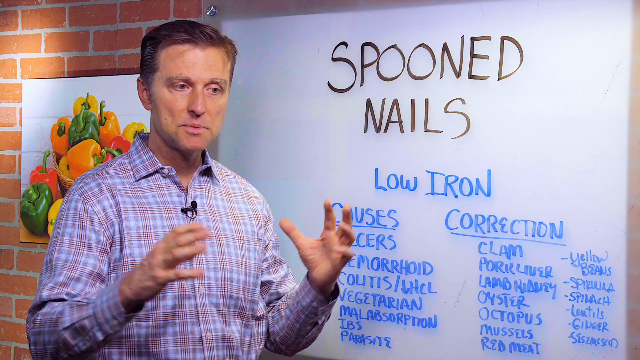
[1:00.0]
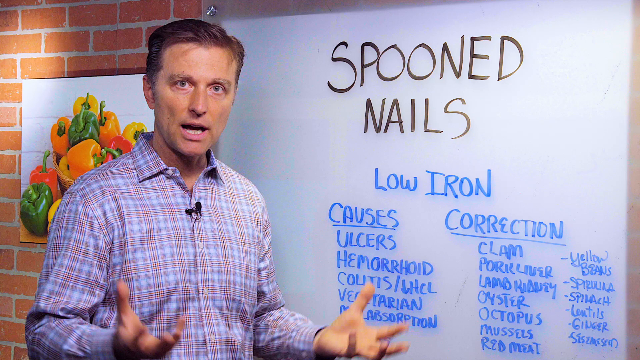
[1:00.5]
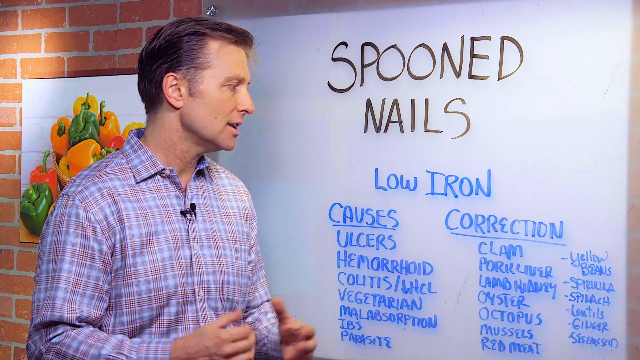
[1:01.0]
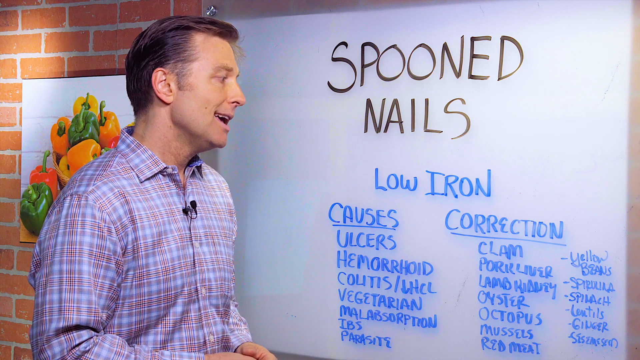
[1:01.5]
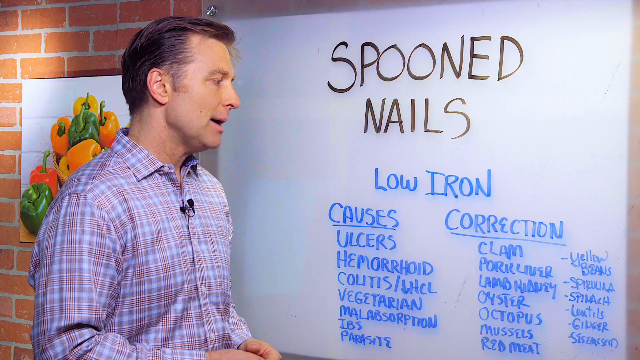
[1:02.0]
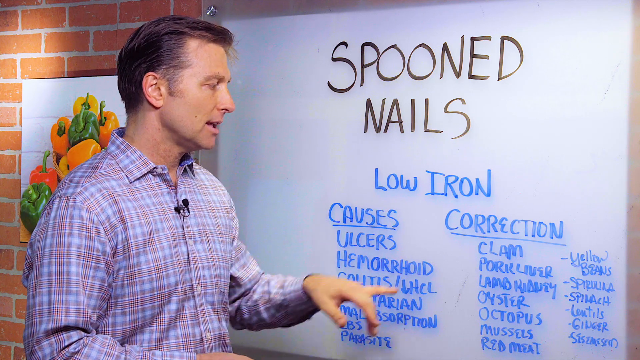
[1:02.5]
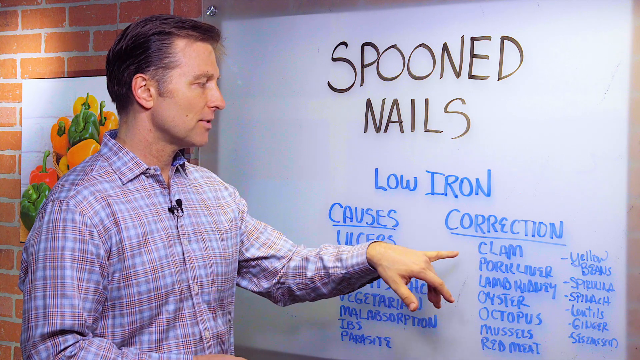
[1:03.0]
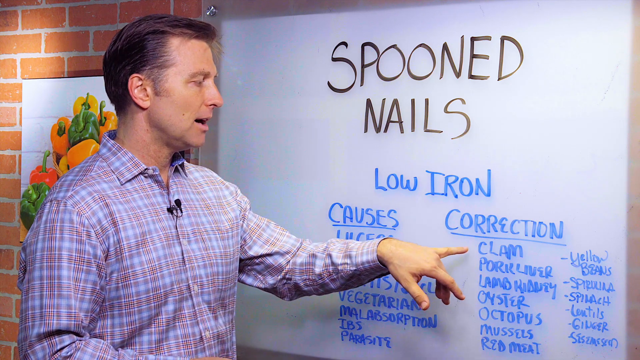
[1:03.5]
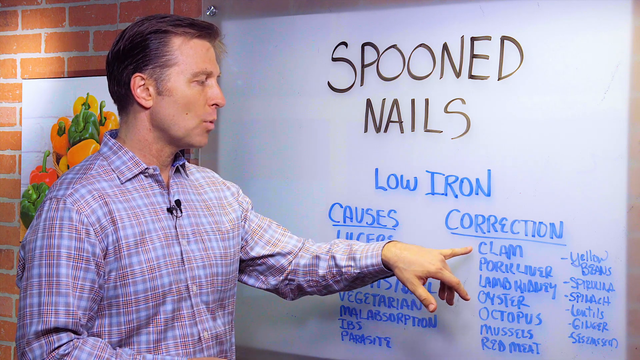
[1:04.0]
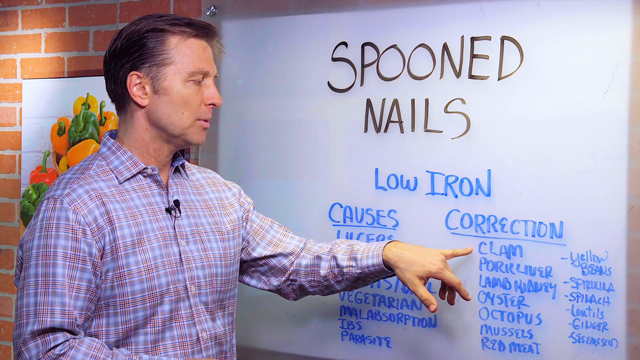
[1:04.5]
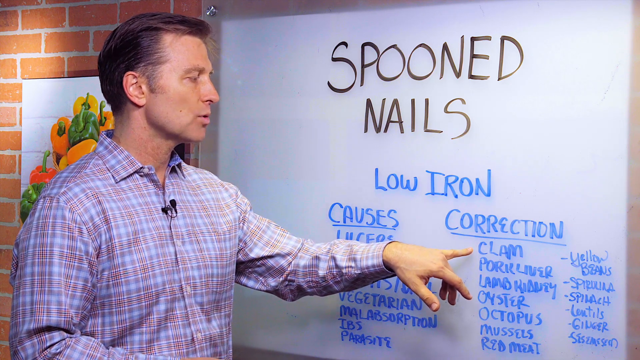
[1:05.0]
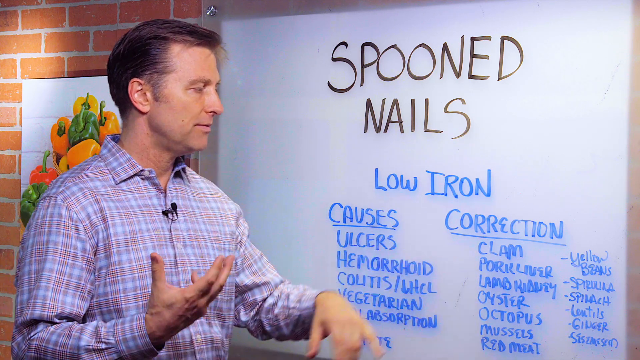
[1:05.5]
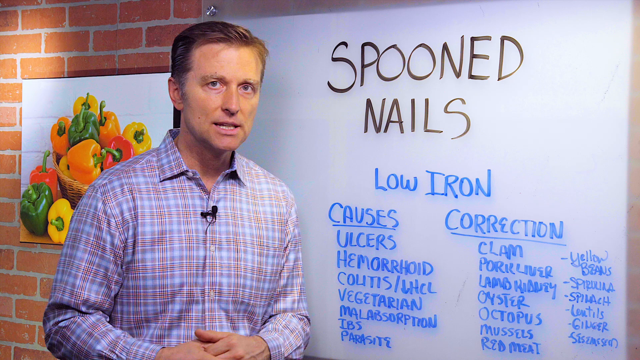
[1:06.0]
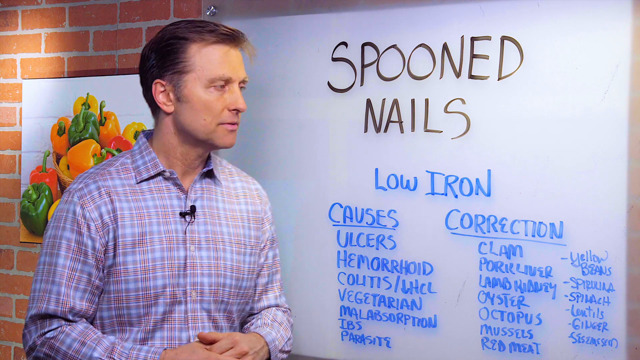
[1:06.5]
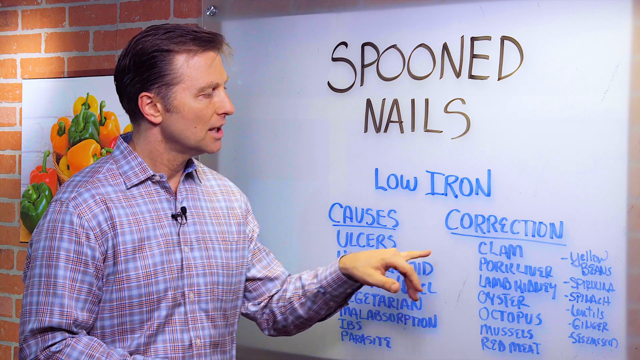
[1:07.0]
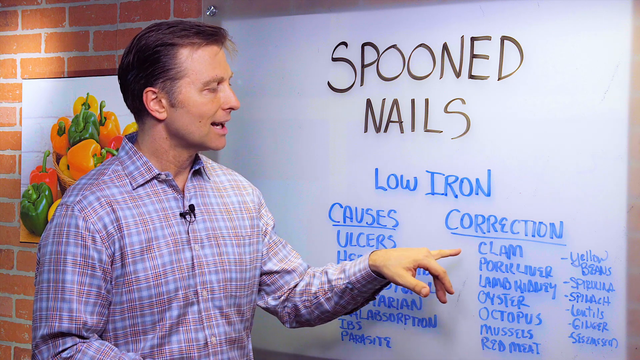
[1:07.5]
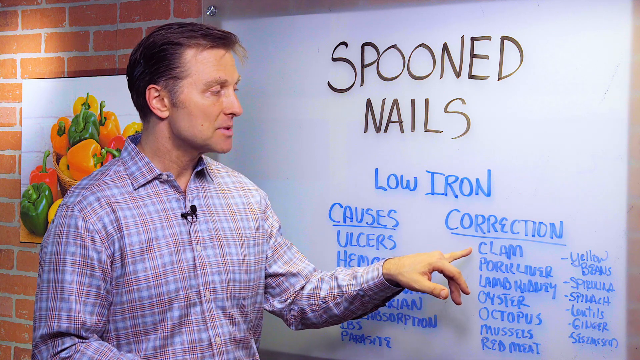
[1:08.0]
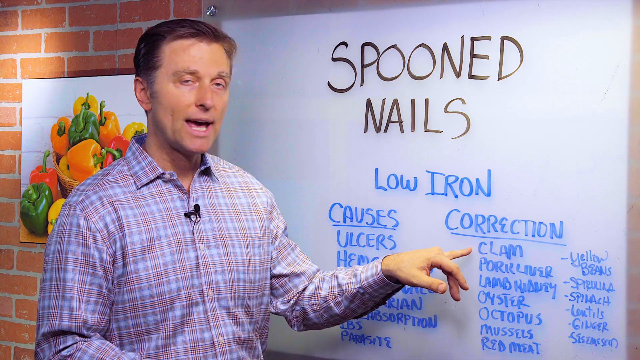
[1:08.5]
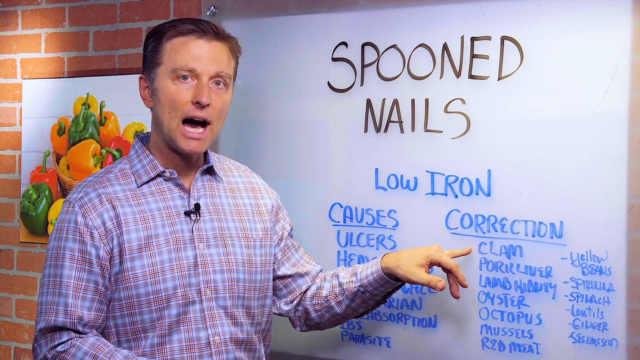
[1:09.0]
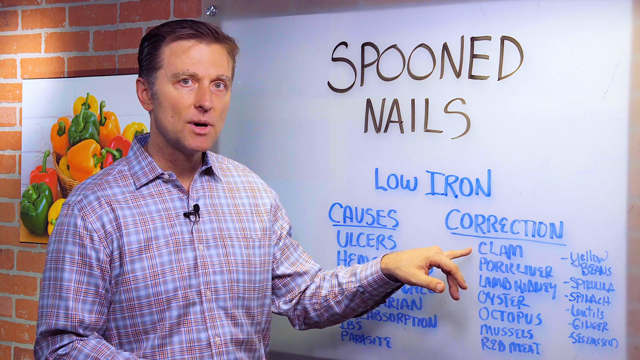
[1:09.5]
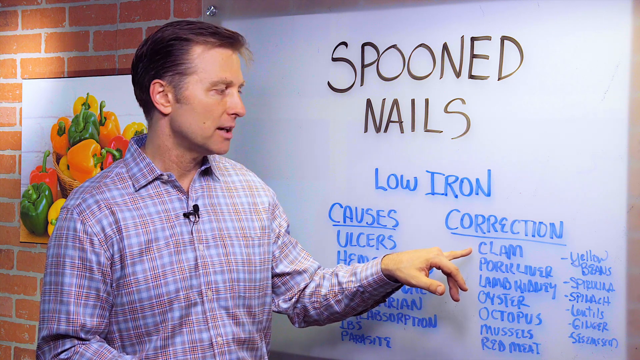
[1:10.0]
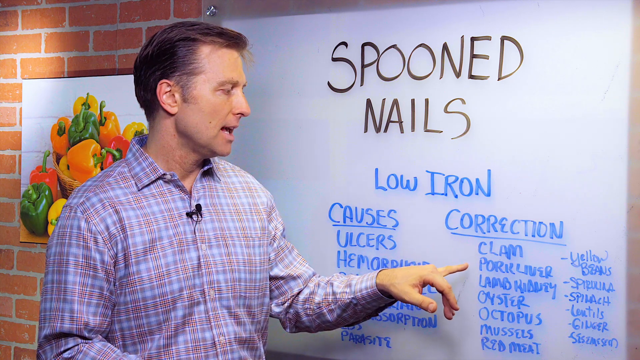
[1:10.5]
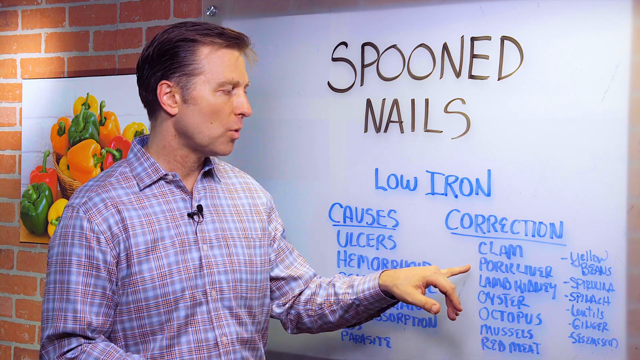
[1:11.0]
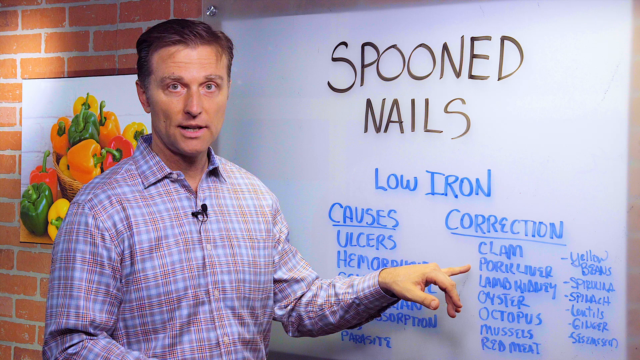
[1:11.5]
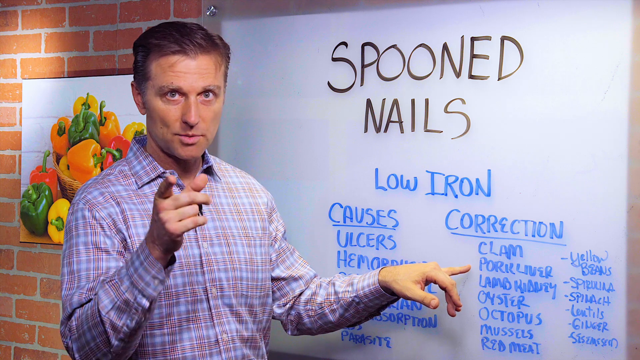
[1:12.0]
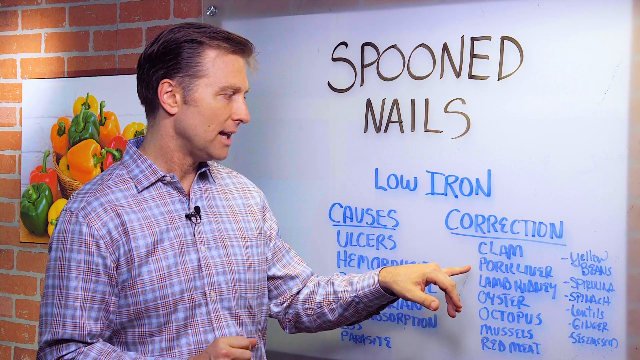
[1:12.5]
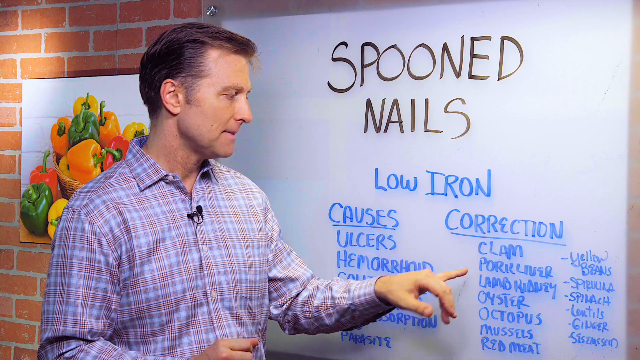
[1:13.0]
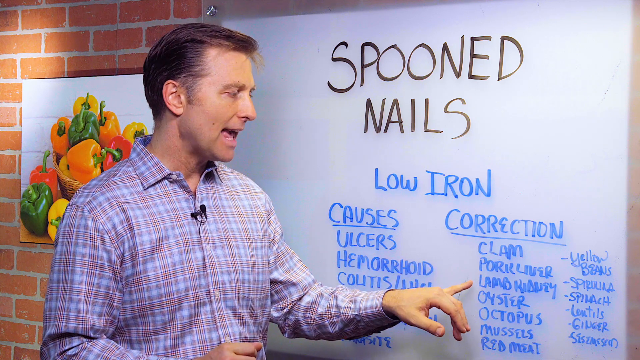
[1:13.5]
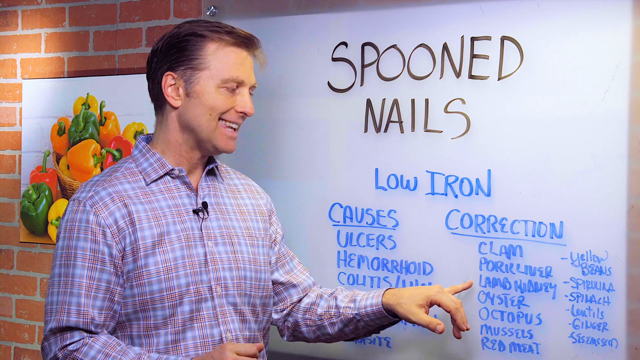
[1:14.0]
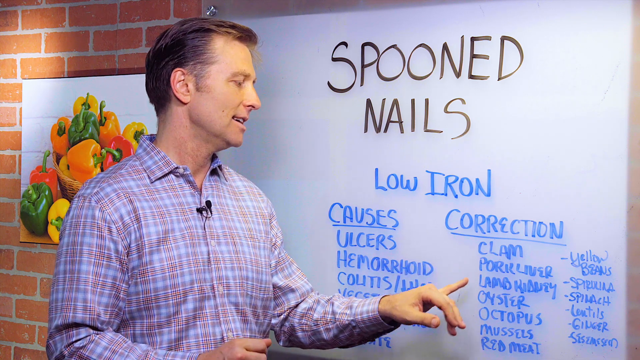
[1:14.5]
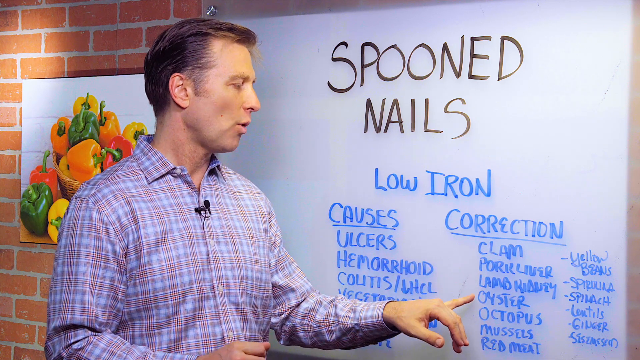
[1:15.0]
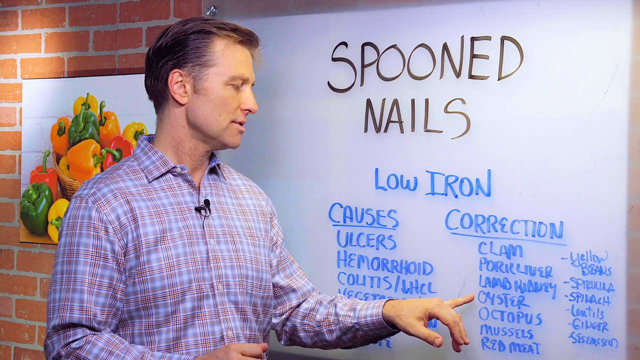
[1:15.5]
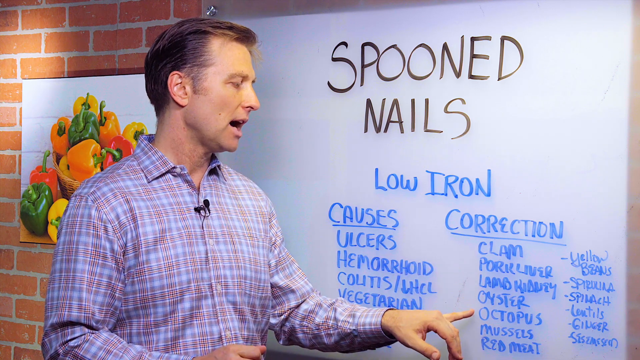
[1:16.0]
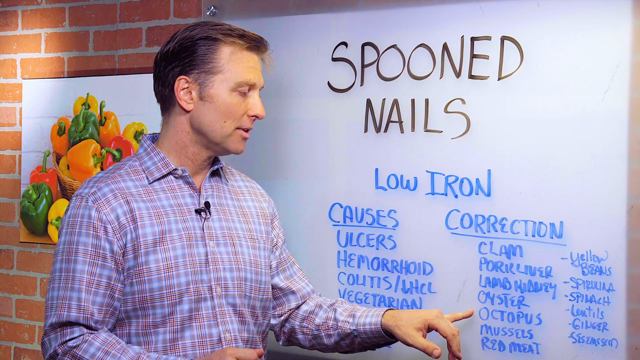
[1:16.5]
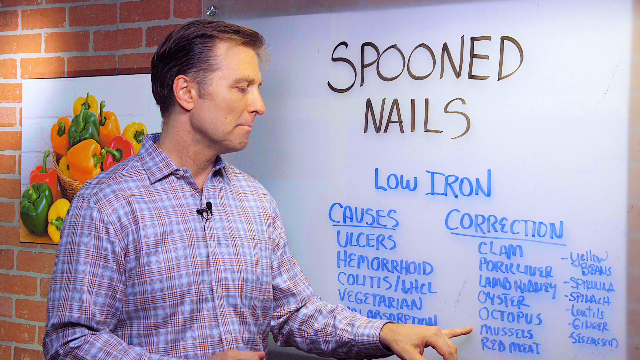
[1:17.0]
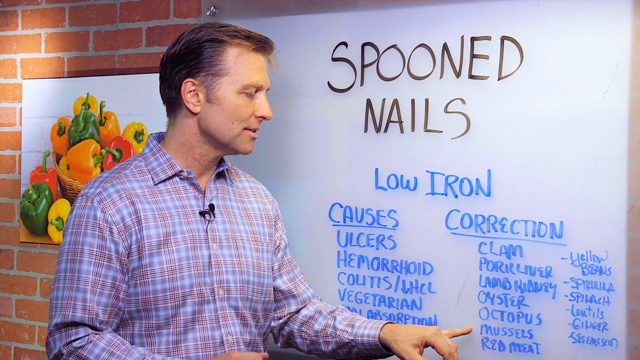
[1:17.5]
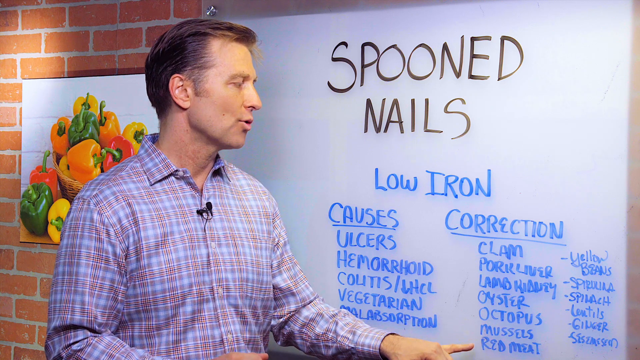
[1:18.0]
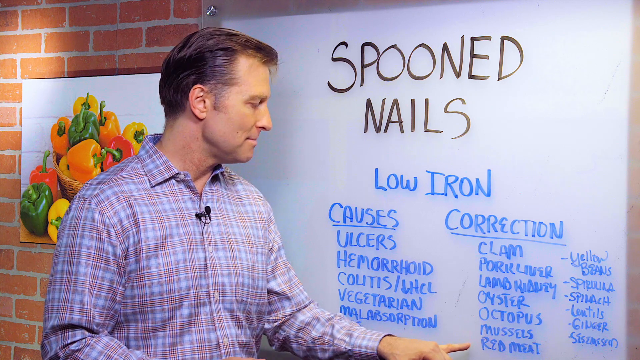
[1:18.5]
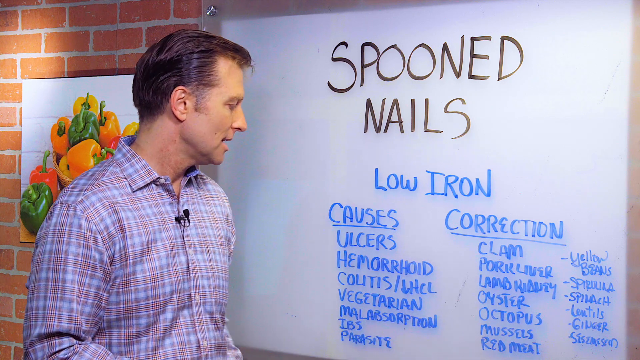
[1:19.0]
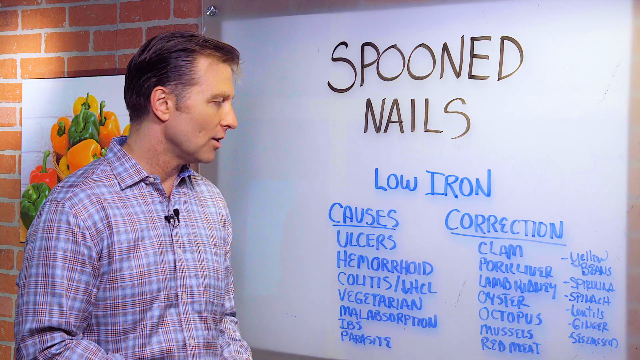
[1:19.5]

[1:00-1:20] A man talks in front of a dry erase board, wearing a microphone clipped to his button-up shirt. He lifts his left arm and uses his left pinky finger to point at words written on the board, his face turned in profile as he speaks. He turns back toward the camera, and his right hand flashes up and down. He talks a little, then turns his body back toward the board and again lifts his arm to point at words with his left pinky. At one point his right hand kind of flashes and points at the camera while he looks at it, but he goes back to standing in profile facing the board, touching each of the words with his pinky while his lips move as he explains something. He also turns to the camera, lifts both hands together, drops them, turns back to profile, and goes back to pointing with his left pinky. Most of his movements are made with his left arm and left hand.